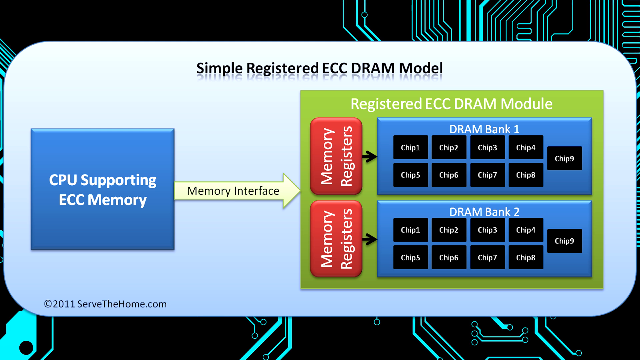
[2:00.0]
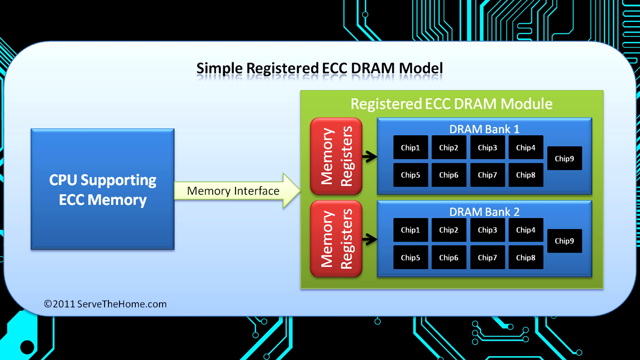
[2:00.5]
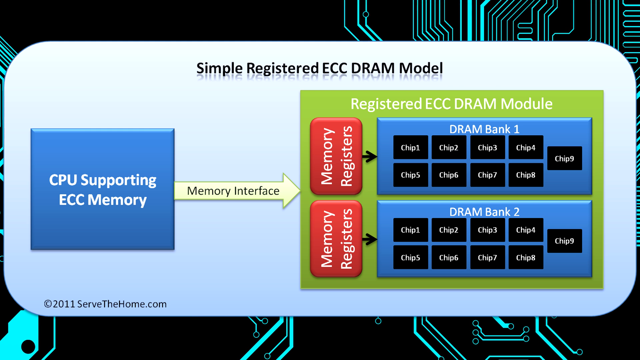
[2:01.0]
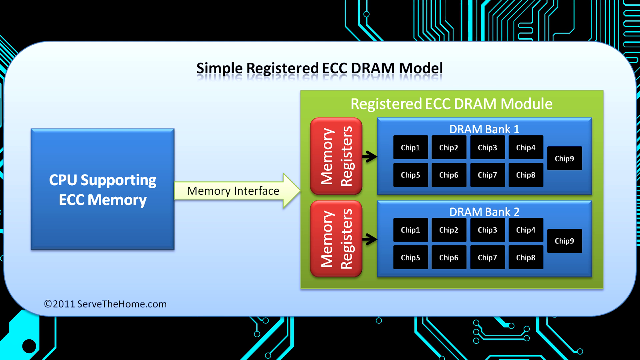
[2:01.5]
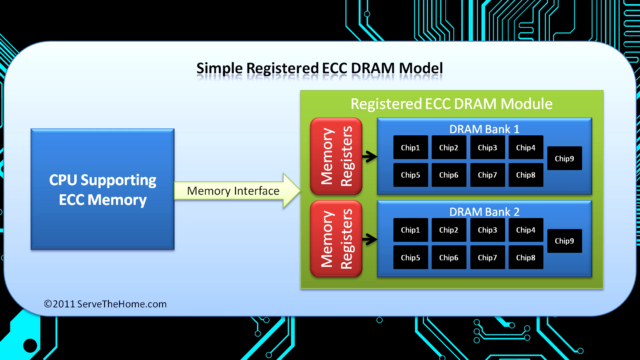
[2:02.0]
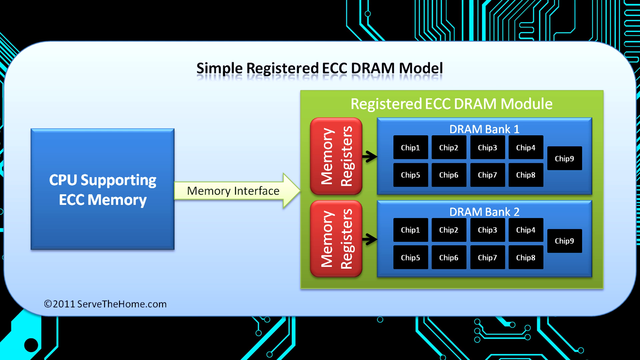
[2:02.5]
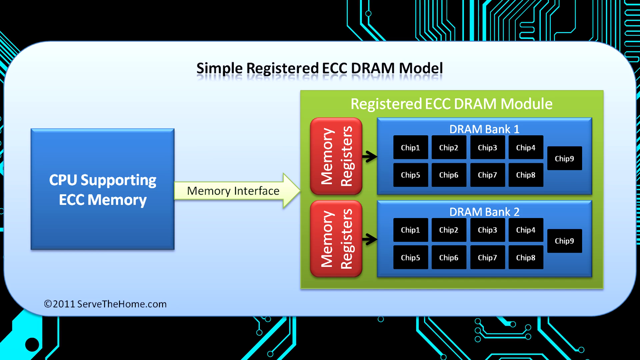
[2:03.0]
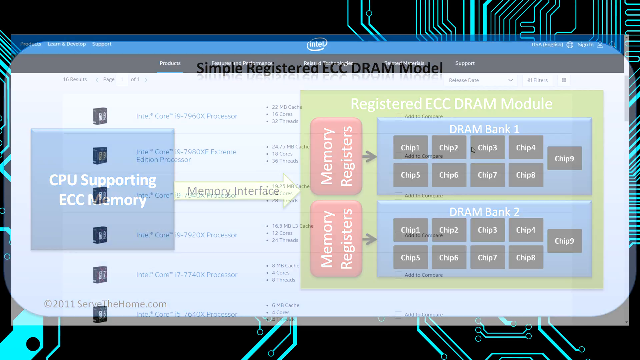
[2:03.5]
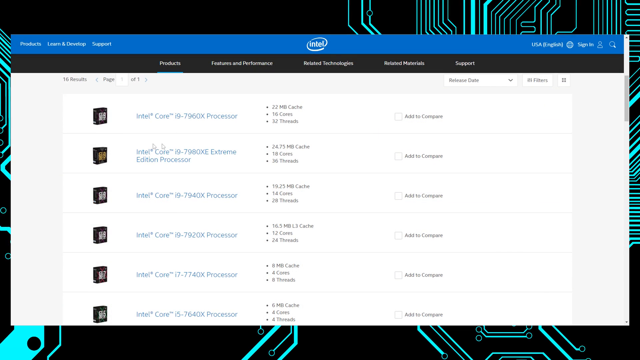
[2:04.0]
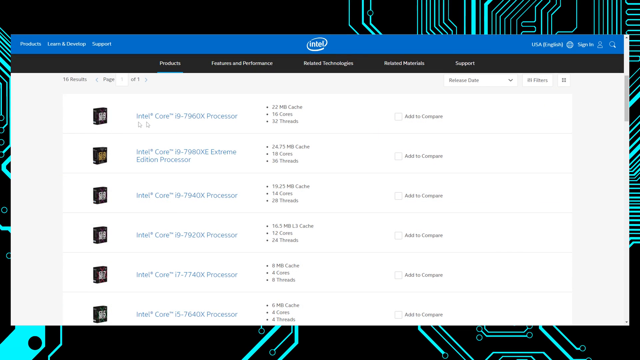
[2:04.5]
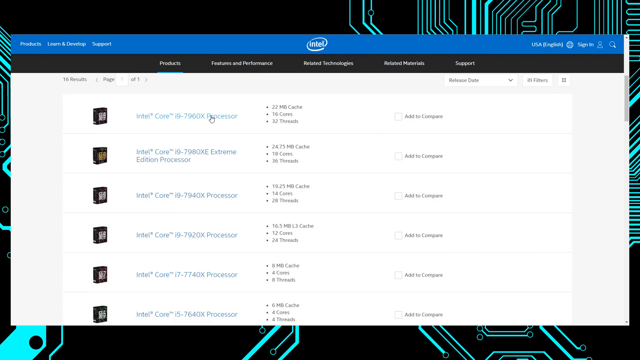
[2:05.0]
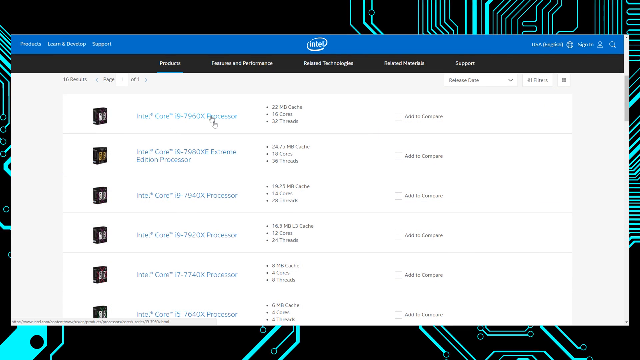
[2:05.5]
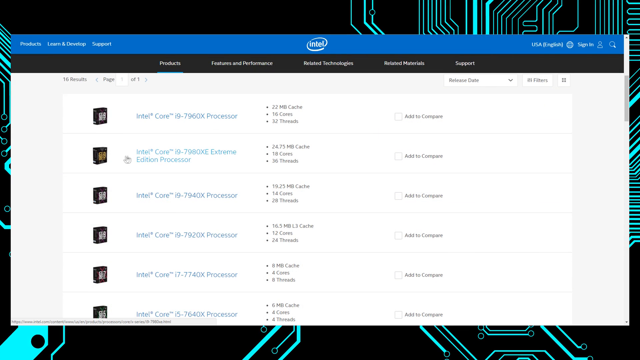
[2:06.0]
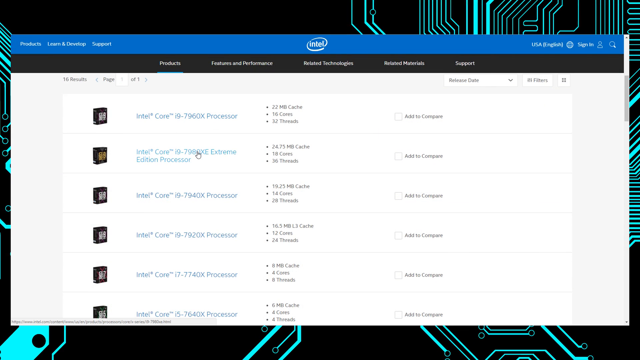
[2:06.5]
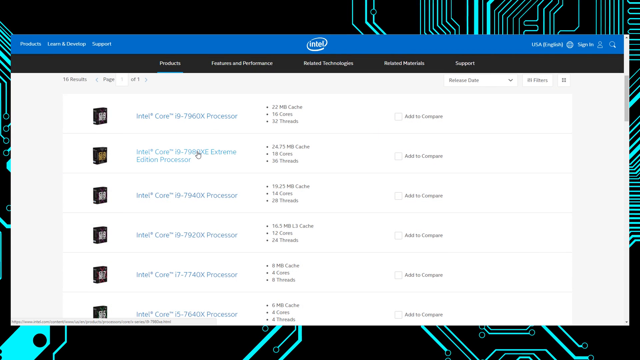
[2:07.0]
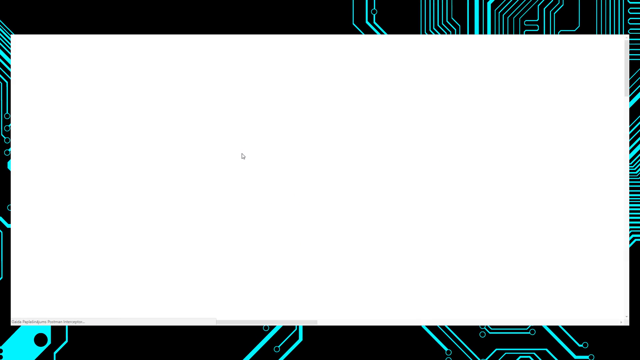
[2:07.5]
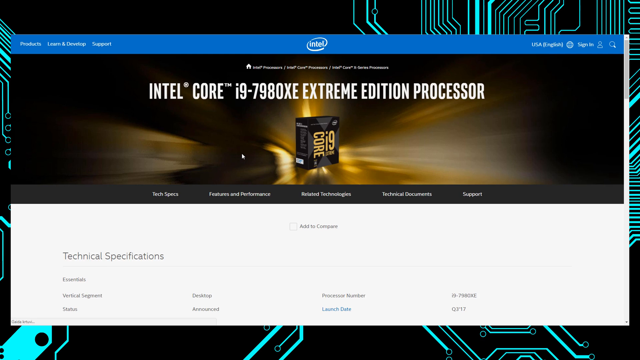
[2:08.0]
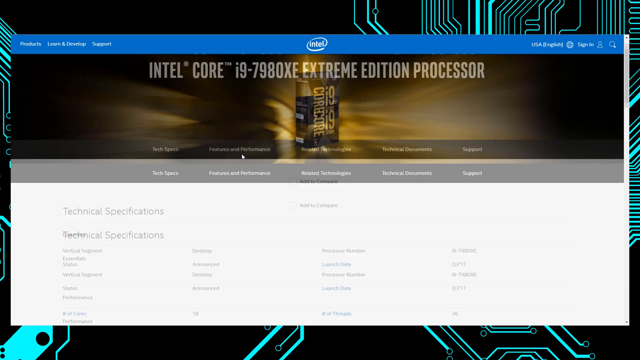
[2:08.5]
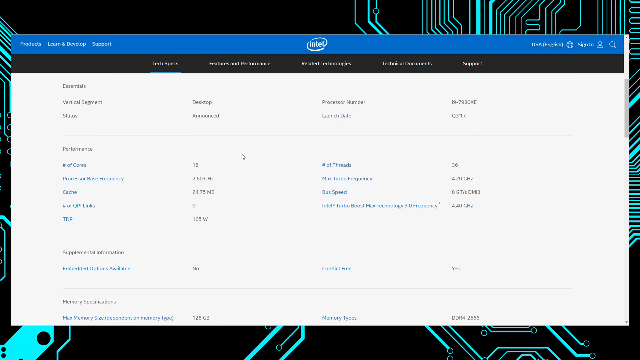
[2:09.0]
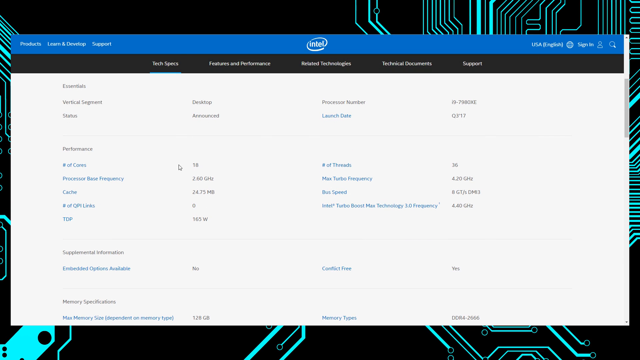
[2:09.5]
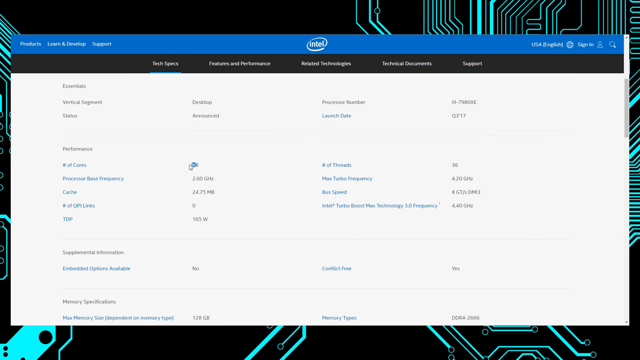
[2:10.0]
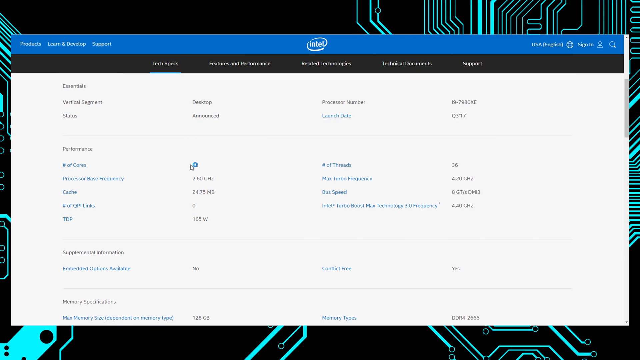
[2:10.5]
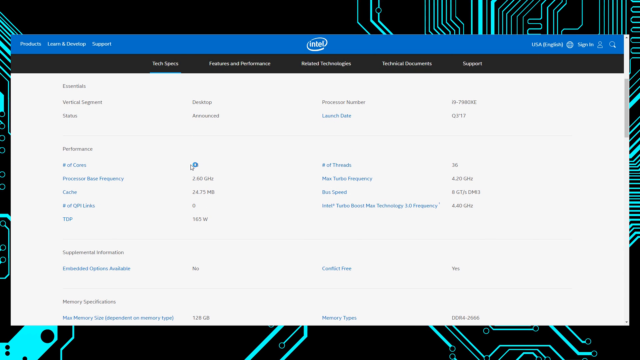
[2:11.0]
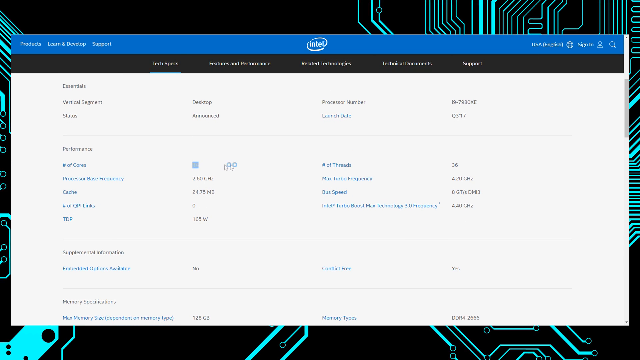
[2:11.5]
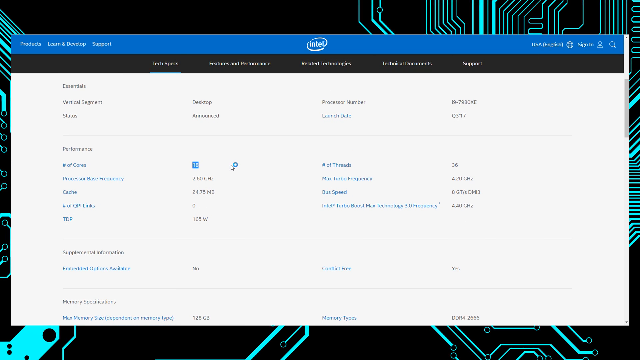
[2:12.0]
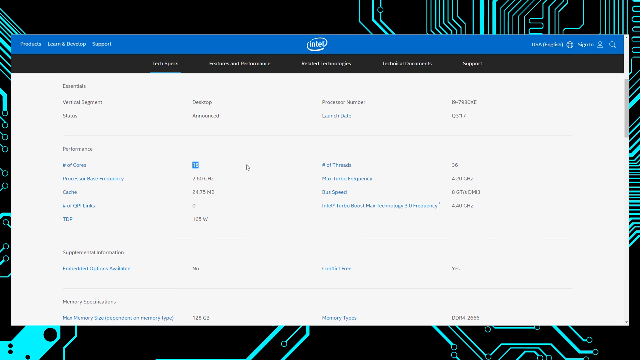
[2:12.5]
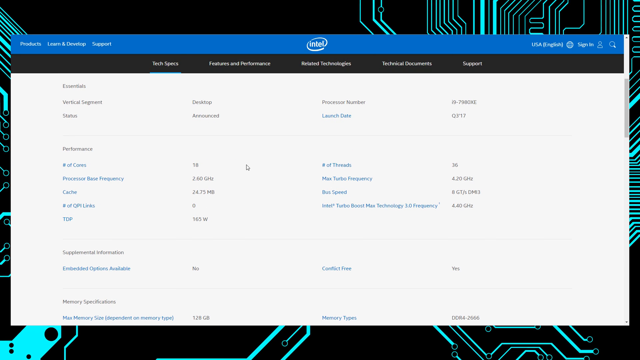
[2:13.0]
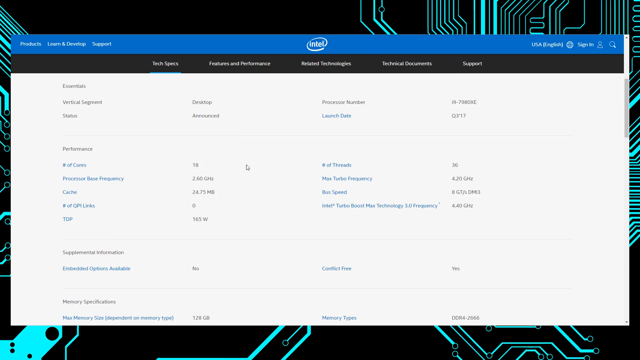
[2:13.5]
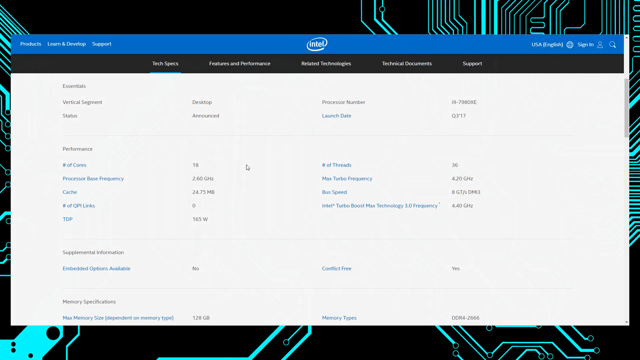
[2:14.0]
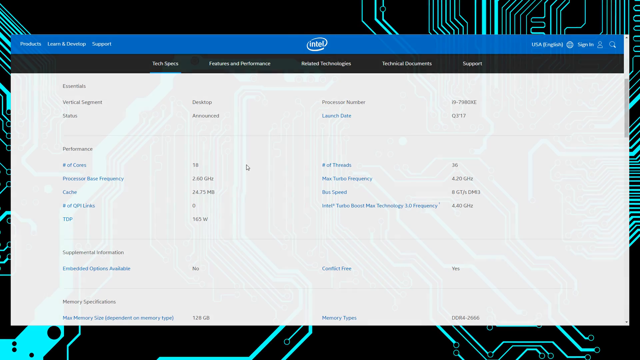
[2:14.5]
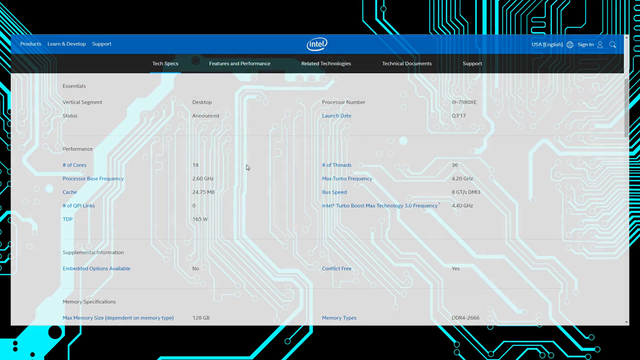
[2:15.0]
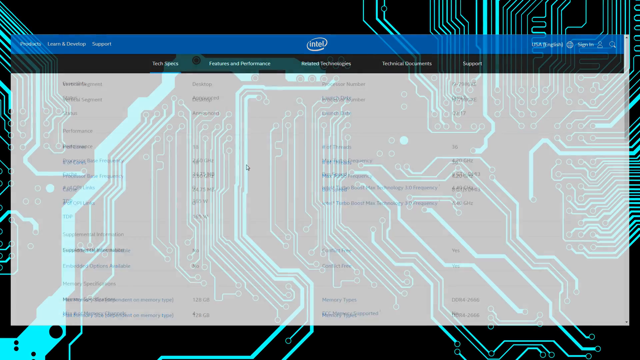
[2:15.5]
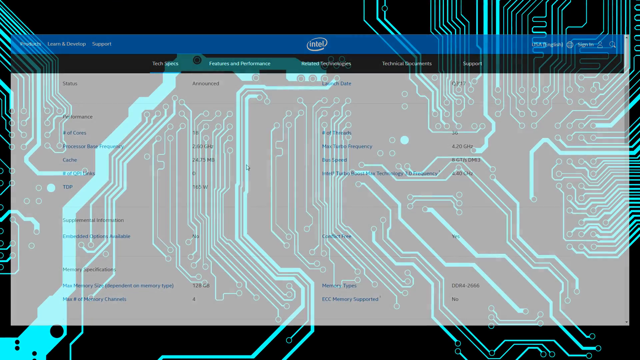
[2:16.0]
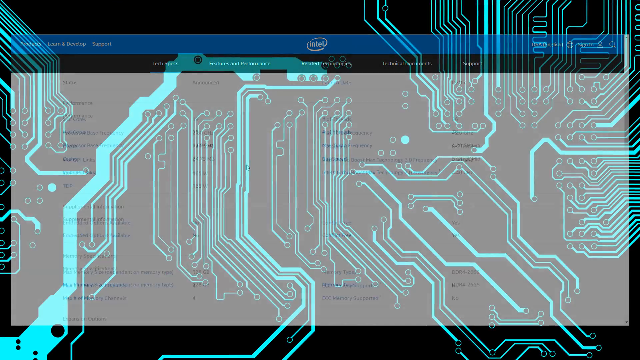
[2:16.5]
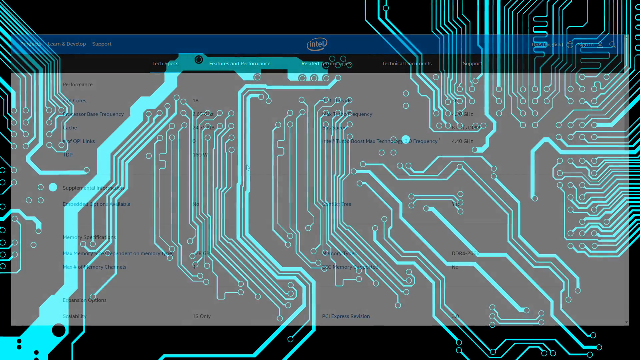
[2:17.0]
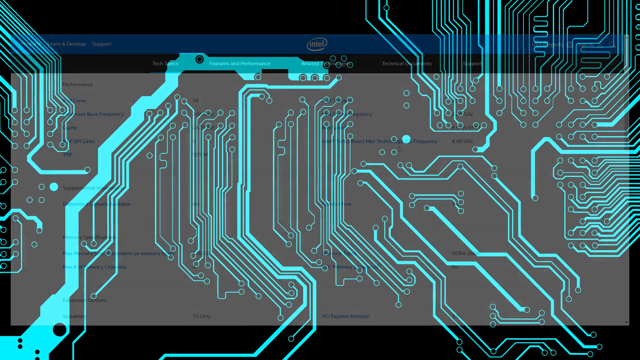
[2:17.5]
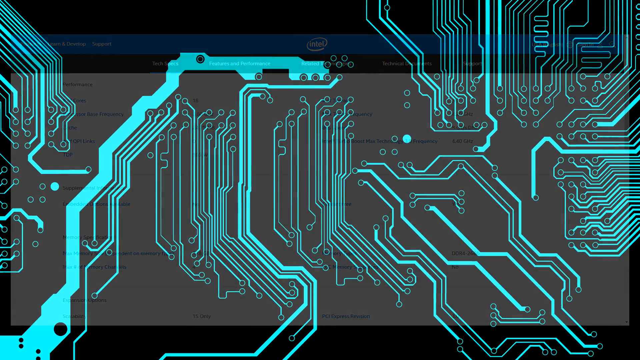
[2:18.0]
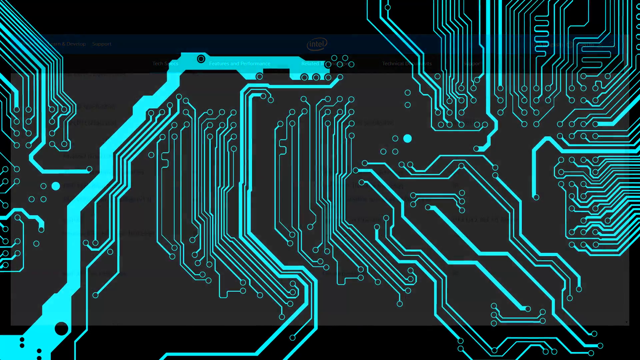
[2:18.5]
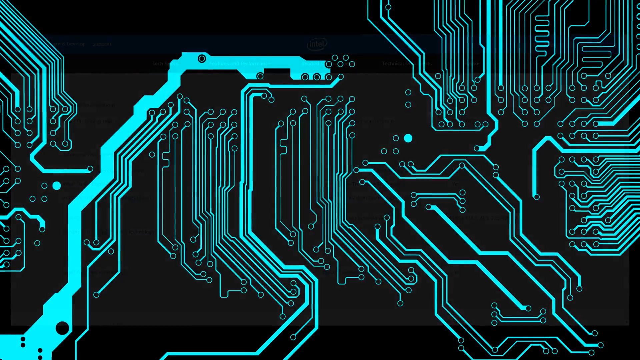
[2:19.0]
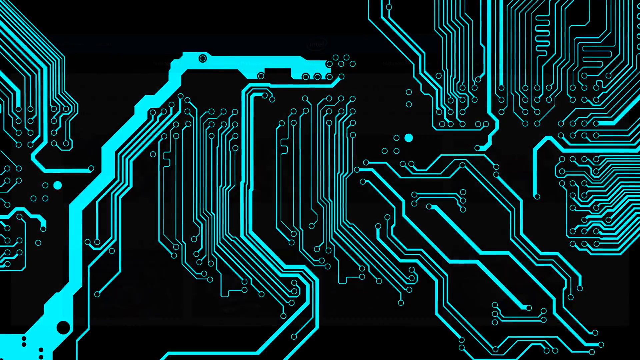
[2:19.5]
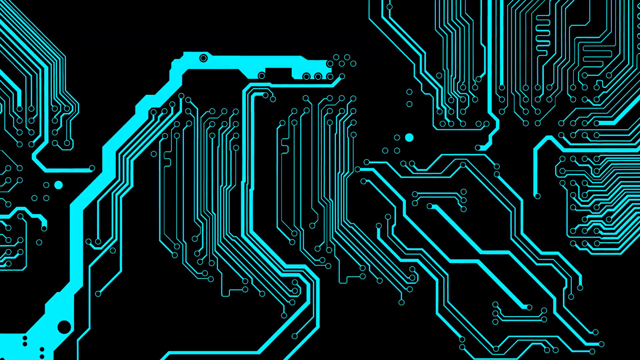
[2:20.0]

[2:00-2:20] After the simple registered ECC DRAM model screen, the video returns to a computer screen where he navigates to a chip listing and goes through the specifications, with the number of cores highlighted and the number of threads shown. This is a different chip, apparently the Intel Core i9-7980XE Extreme Edition processor; it is clicked on and the page is scrolled down through its key specifications and data. That image then fades away to a futuristic green-blue, chip-like computer graphic that looks like Tron, and the video ends abruptly, without a formal conclusion, bug, or logo.